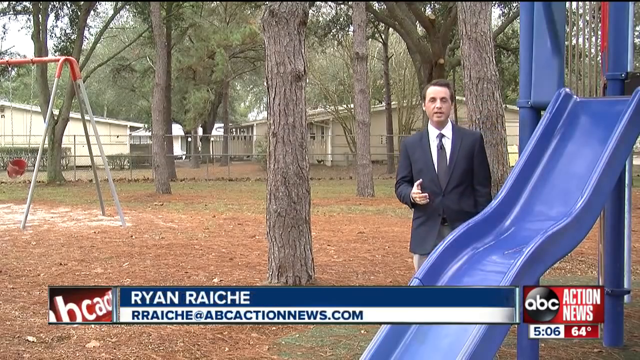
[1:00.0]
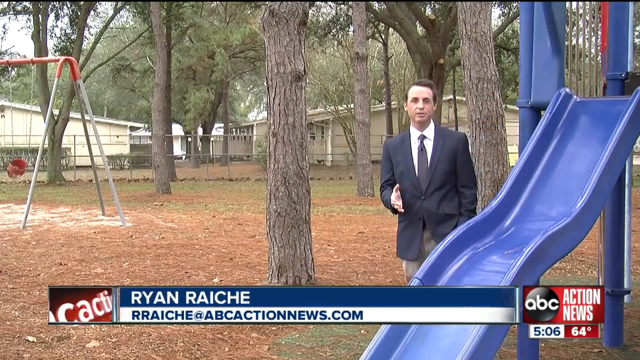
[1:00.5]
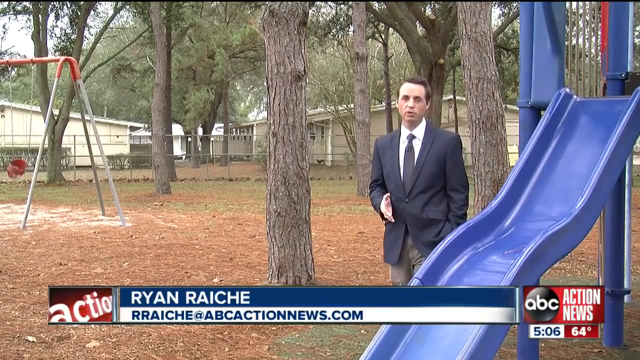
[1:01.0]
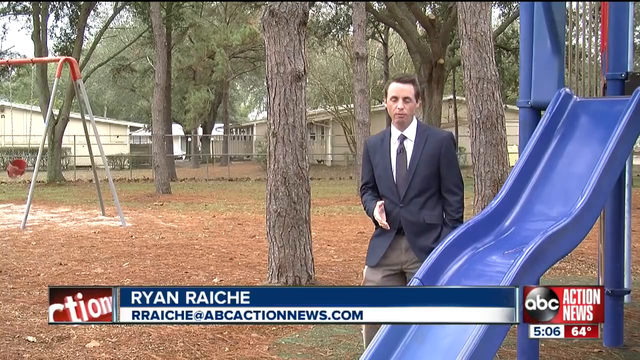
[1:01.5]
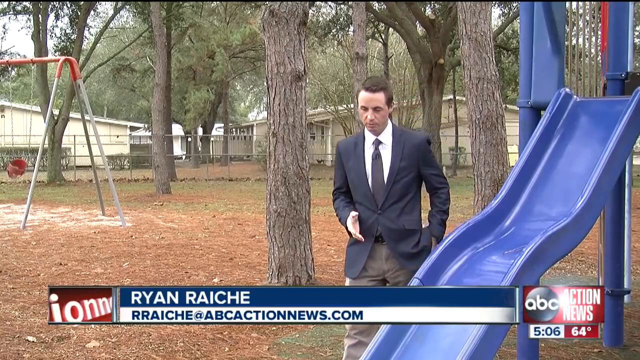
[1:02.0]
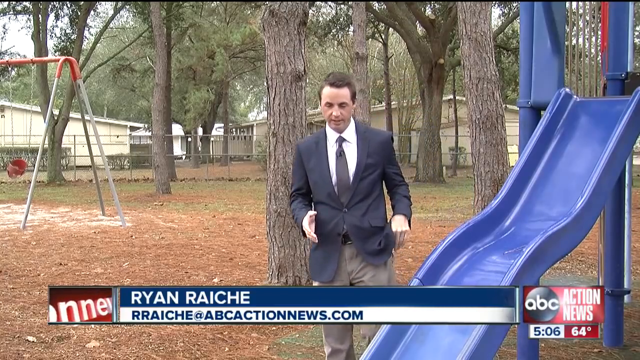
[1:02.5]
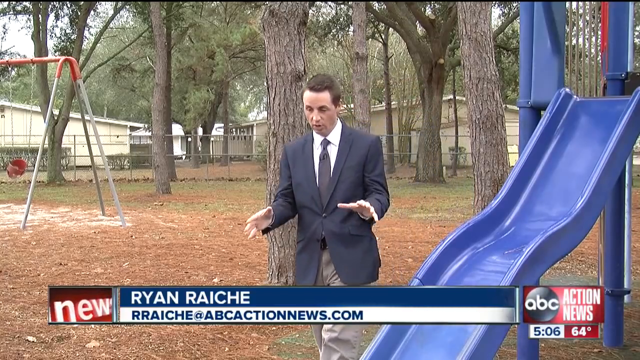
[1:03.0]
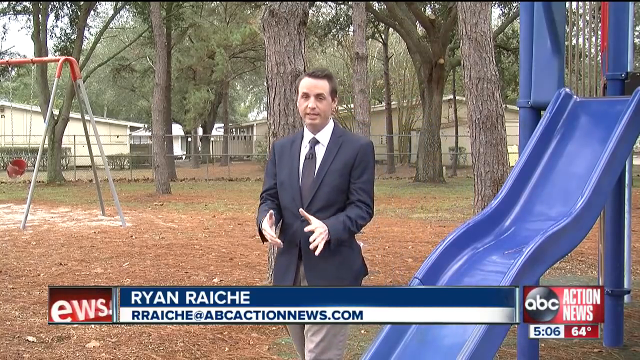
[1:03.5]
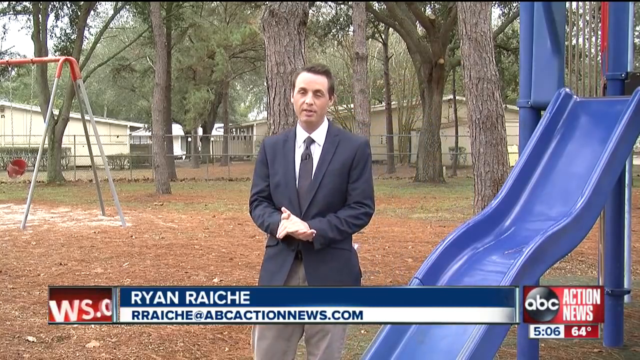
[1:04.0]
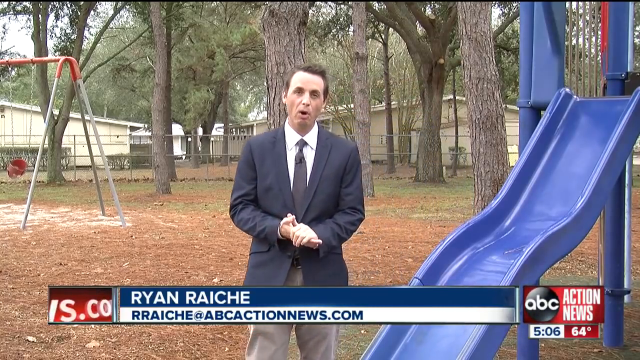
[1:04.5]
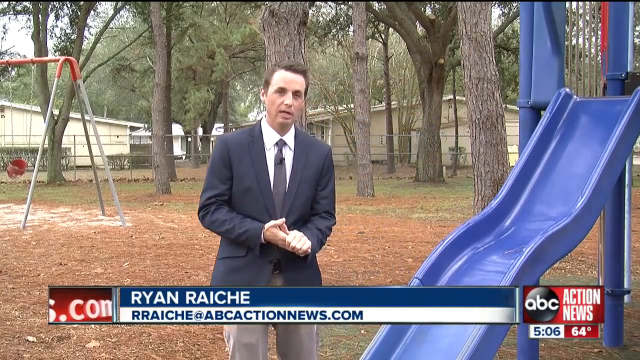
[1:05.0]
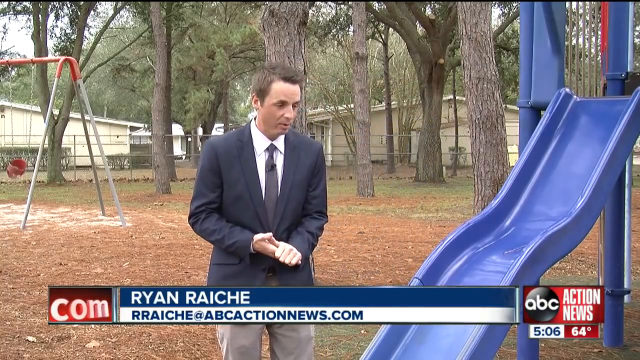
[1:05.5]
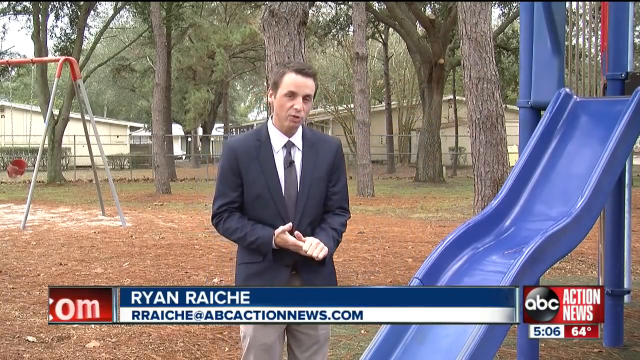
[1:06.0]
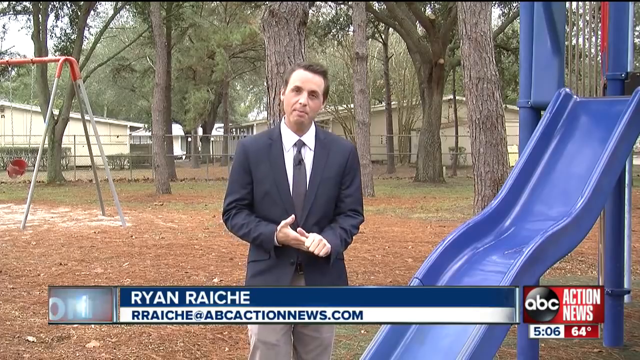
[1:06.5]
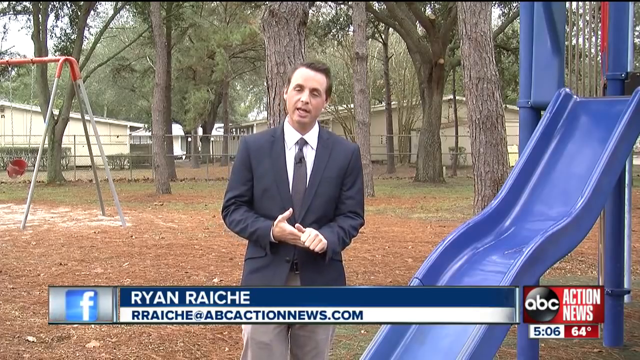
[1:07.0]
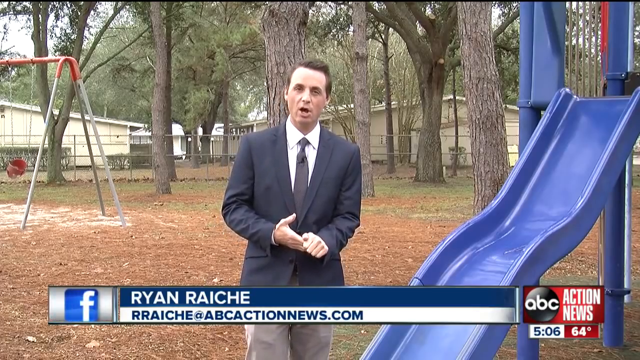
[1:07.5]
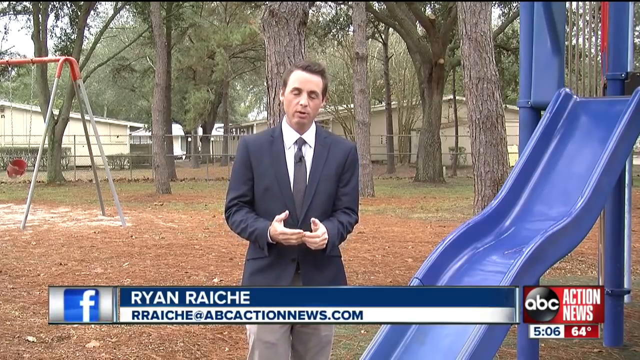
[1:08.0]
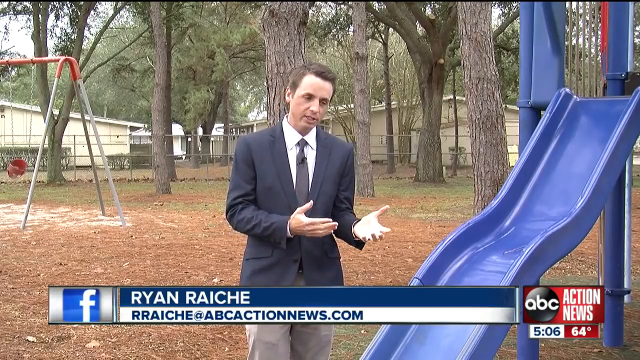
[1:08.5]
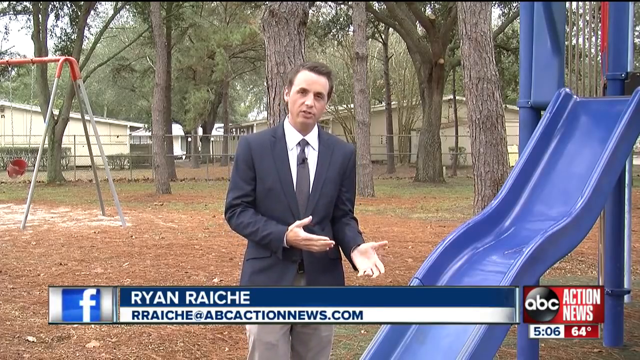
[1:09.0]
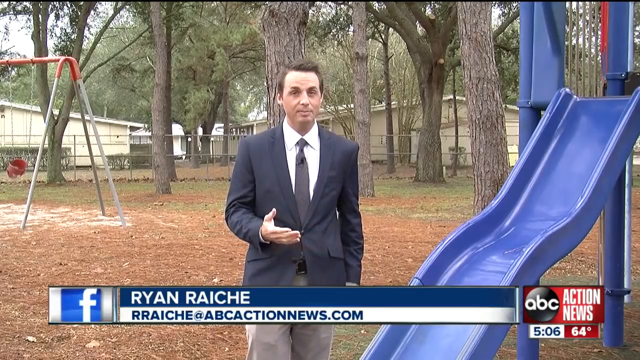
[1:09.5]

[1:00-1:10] A man walks toward the camera; he is the news reporter for the story. The scene is set in a backyard or a park with many trees around him; the trees seem pretty tall and bare at the bottom, with leaves visible at the top. Behind the trees is a chain-link fence, and on the other side of the fence are two tannish-white buildings with sloped roofs. Mulch is spread everywhere on the ground, with some grass growing mostly between the mulch patches. On the far left is a metal swing set holding a red baby swing, and to the right of the man is a blue slide, not very tall, maybe 6 feet. The reporter is a white man with short brown hair, wearing a black suit with a black tie and a white shirt underneath. Text on the screen gives his name as "Ryan Ricci," and on the right it says "ABC Action News." As he continues walking in the frame, he talks and motions with his hands.